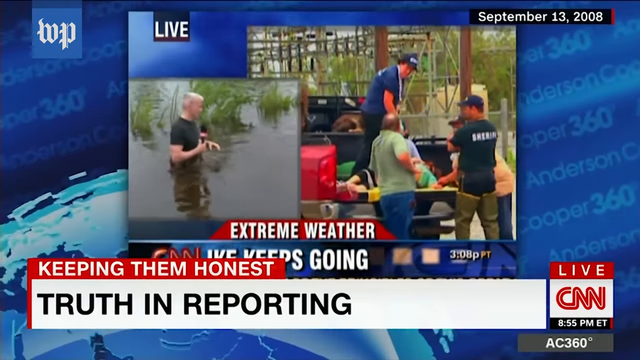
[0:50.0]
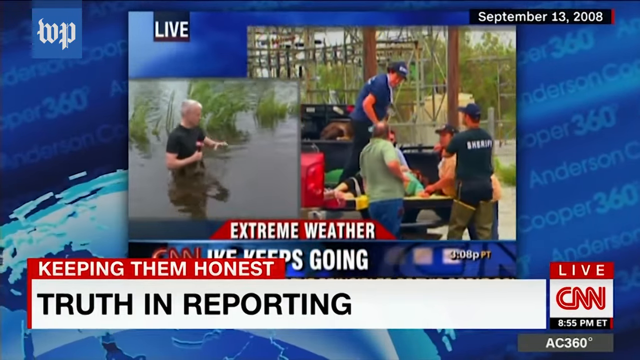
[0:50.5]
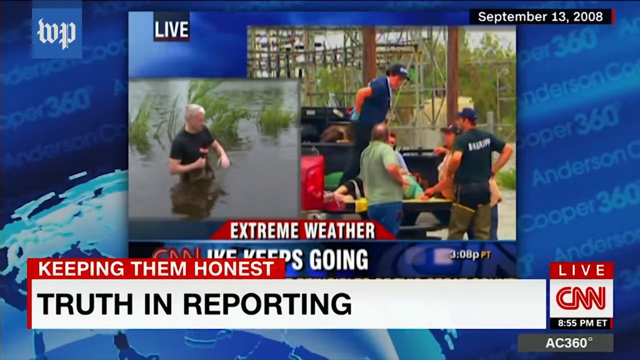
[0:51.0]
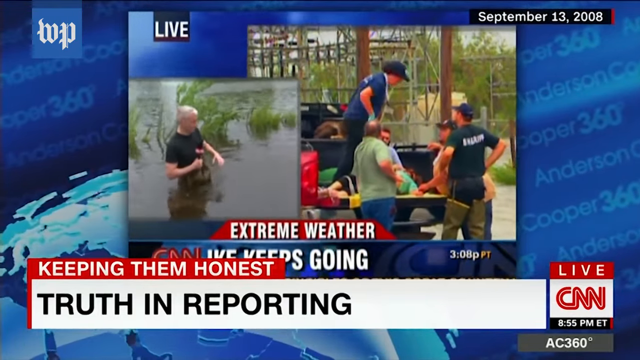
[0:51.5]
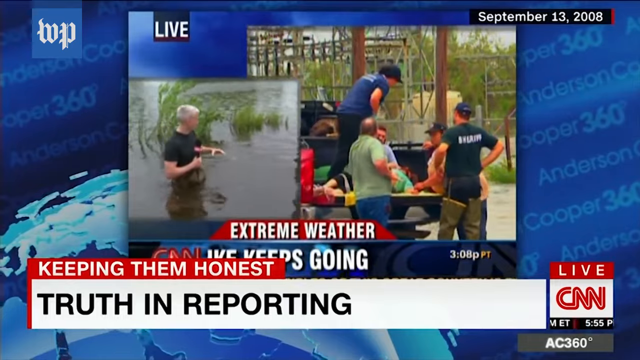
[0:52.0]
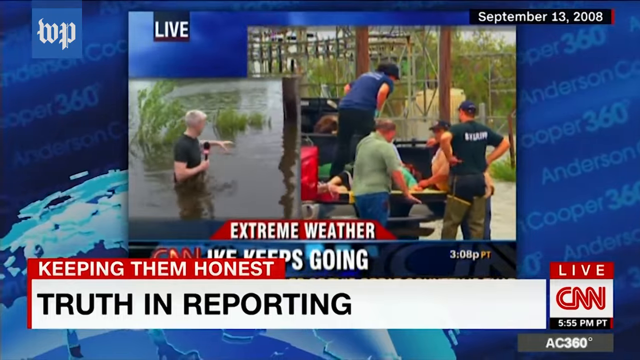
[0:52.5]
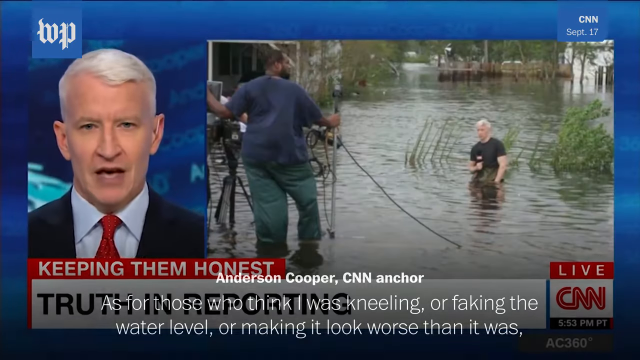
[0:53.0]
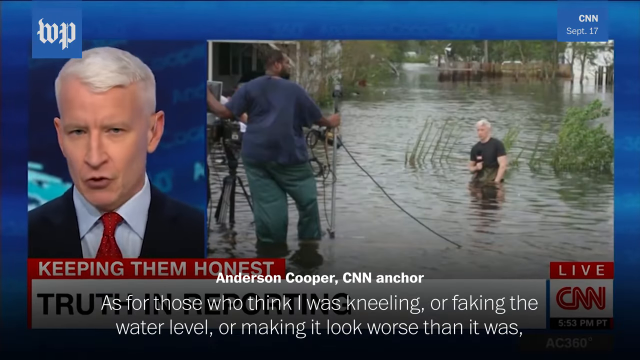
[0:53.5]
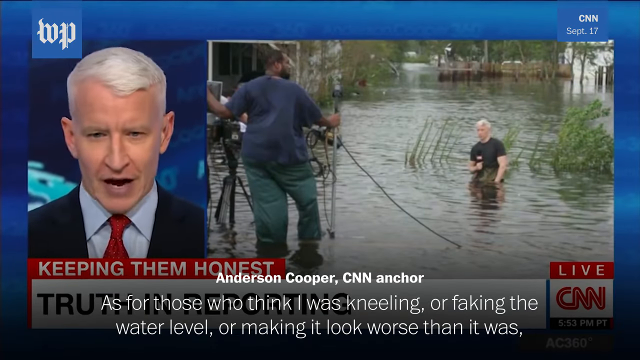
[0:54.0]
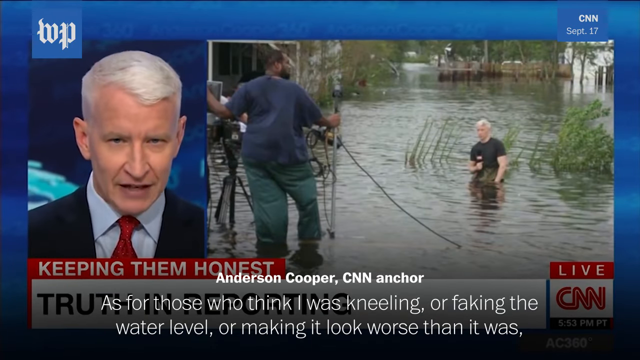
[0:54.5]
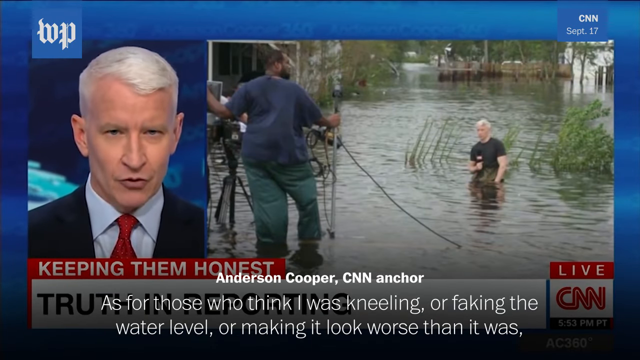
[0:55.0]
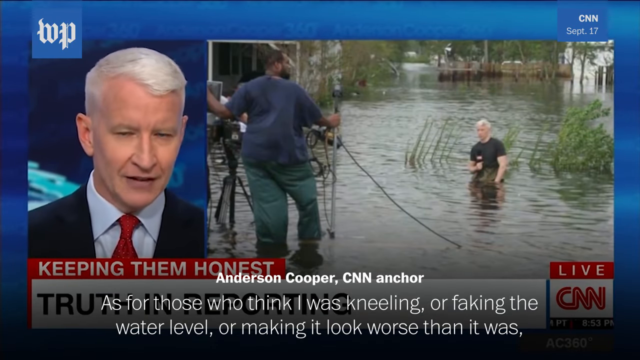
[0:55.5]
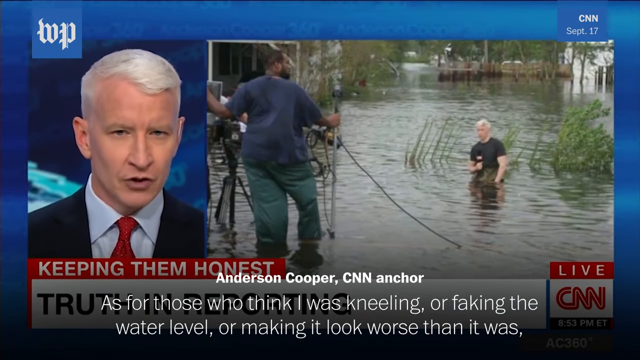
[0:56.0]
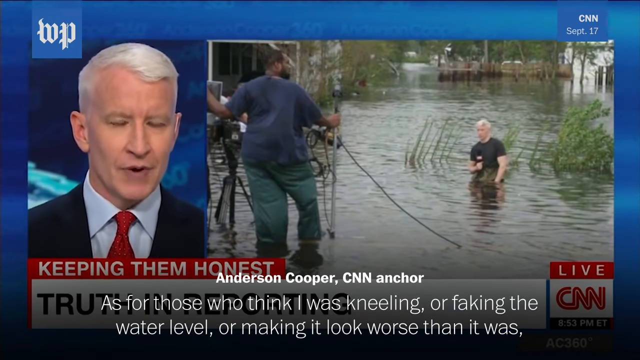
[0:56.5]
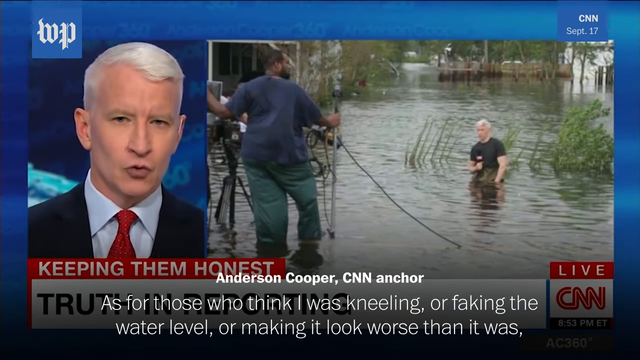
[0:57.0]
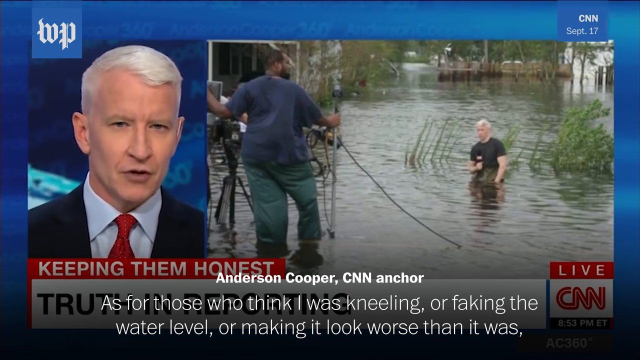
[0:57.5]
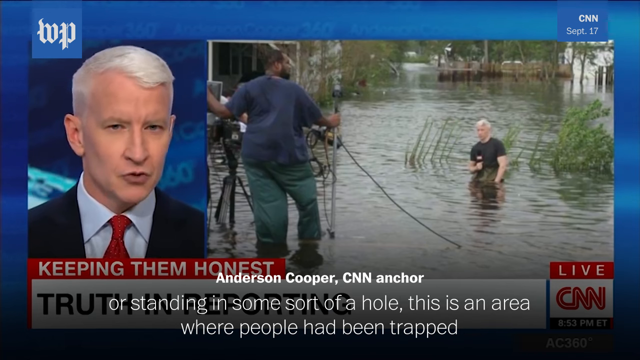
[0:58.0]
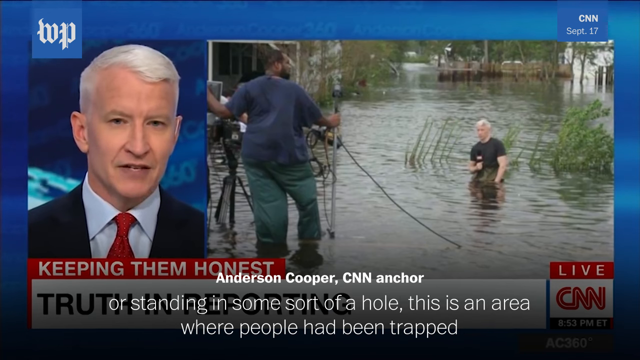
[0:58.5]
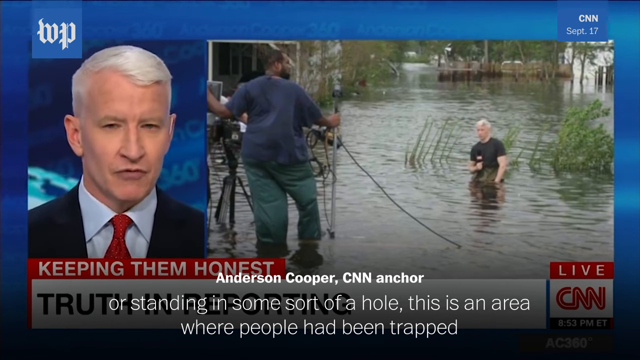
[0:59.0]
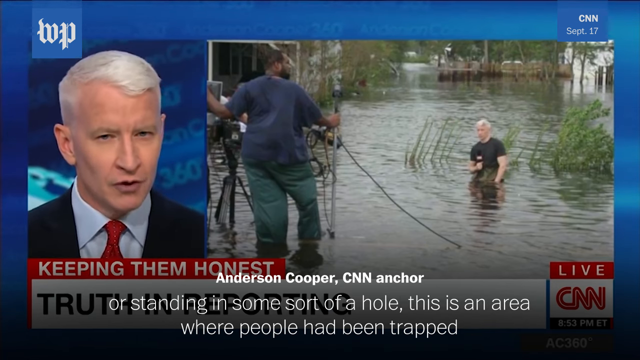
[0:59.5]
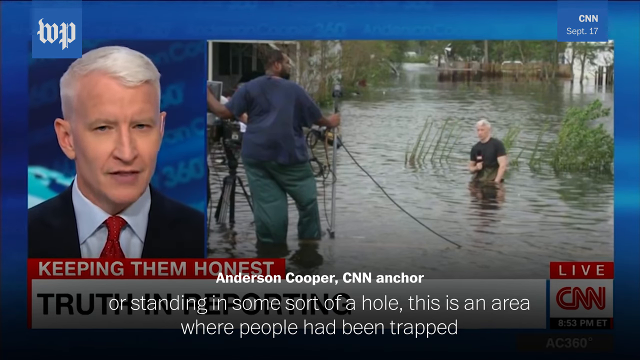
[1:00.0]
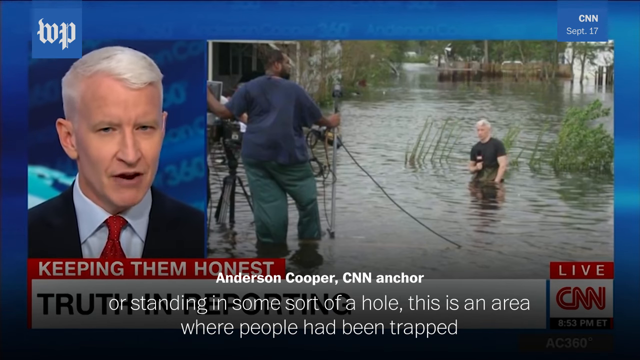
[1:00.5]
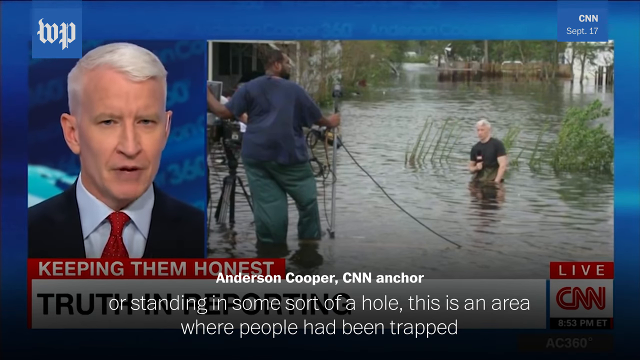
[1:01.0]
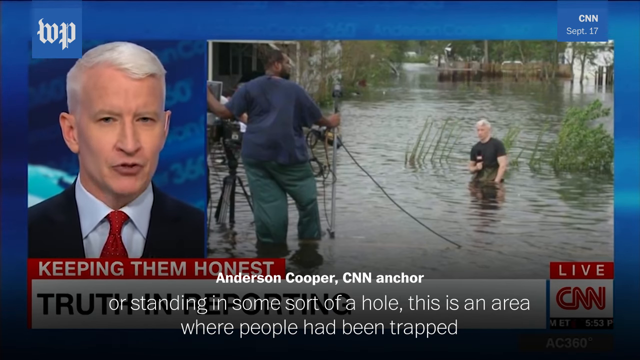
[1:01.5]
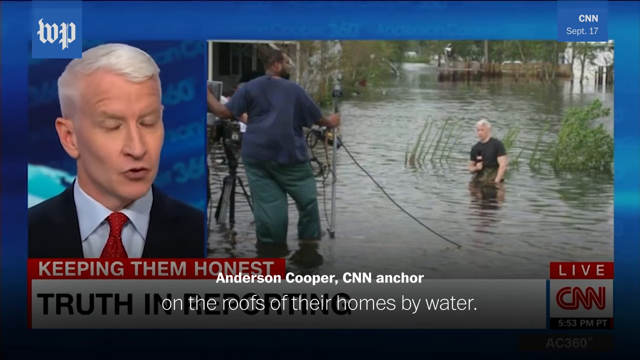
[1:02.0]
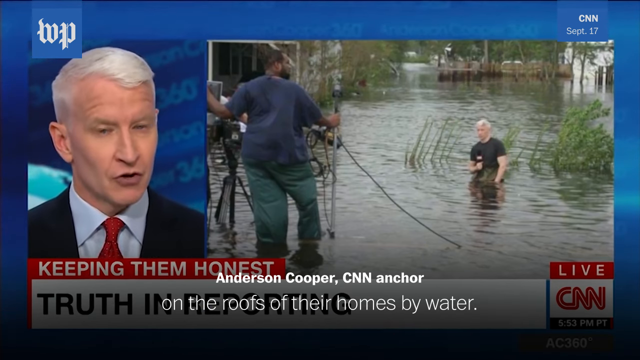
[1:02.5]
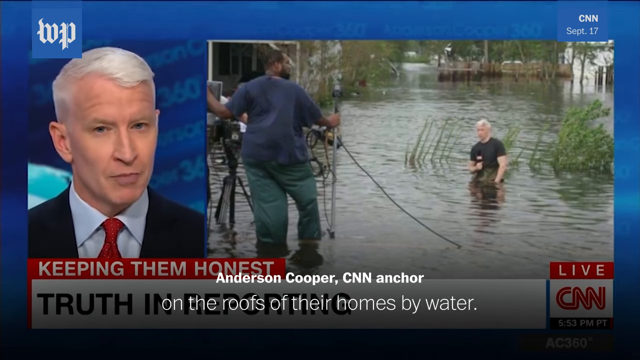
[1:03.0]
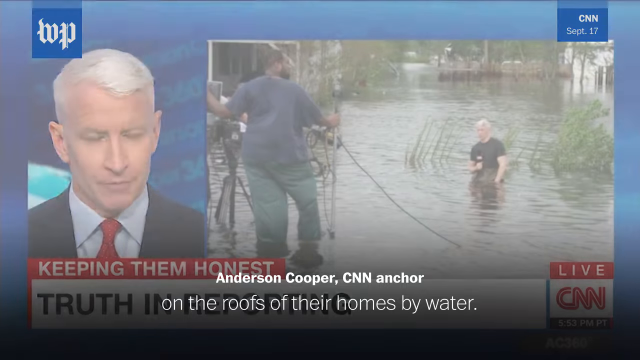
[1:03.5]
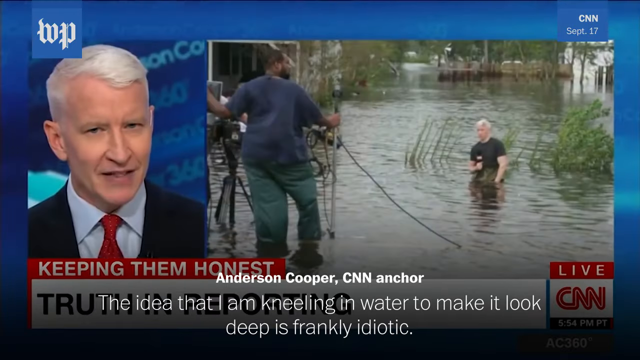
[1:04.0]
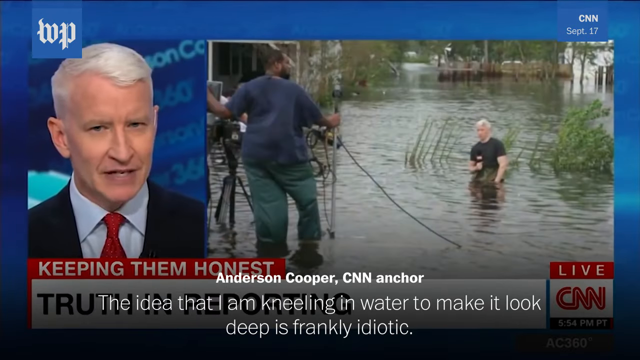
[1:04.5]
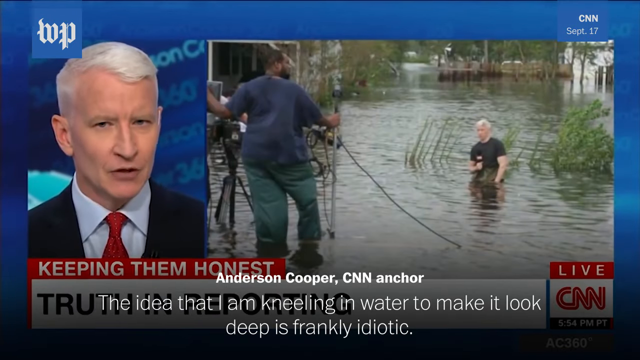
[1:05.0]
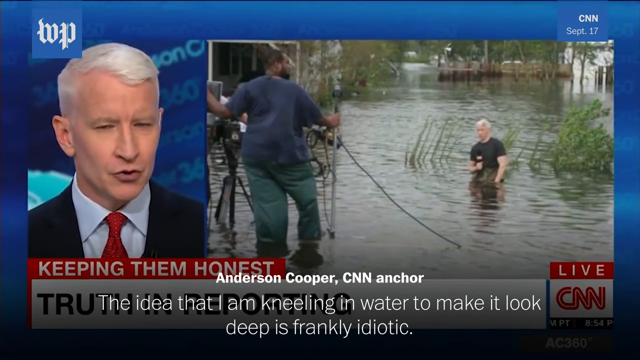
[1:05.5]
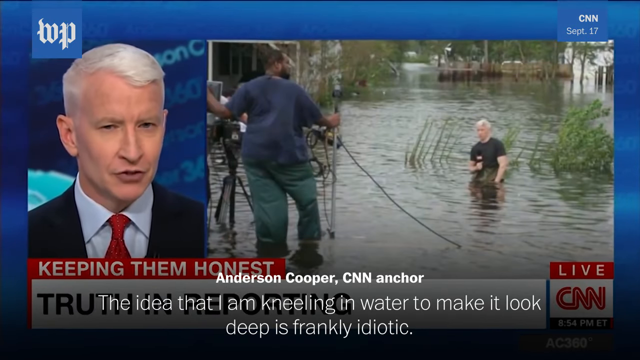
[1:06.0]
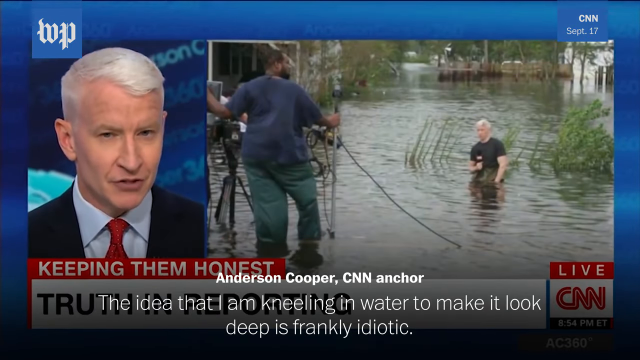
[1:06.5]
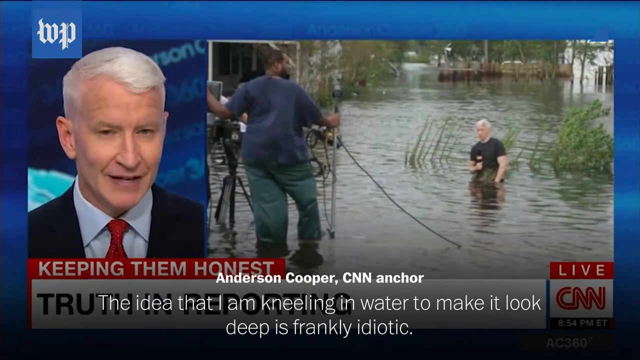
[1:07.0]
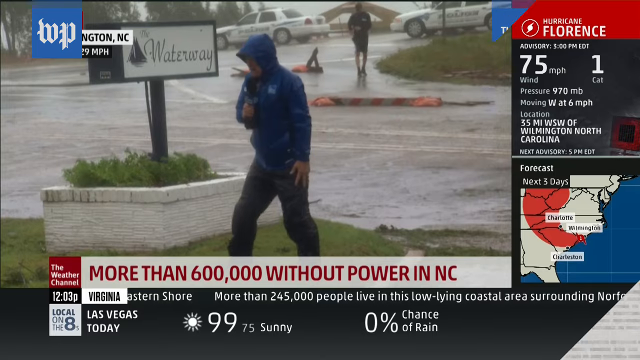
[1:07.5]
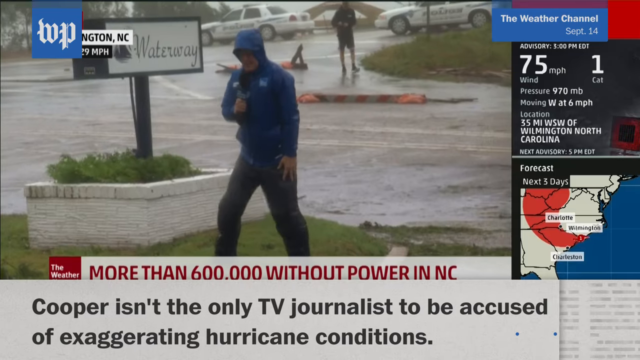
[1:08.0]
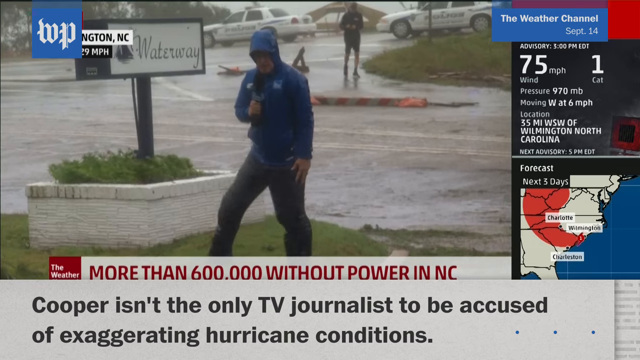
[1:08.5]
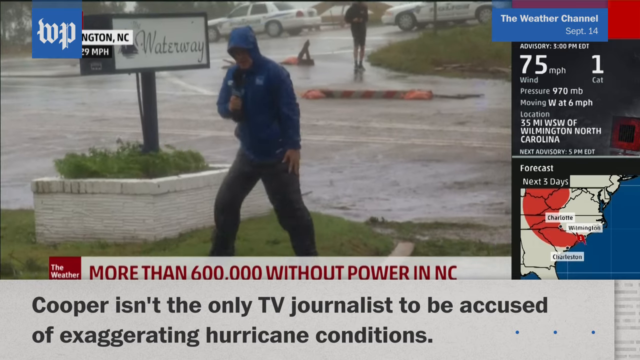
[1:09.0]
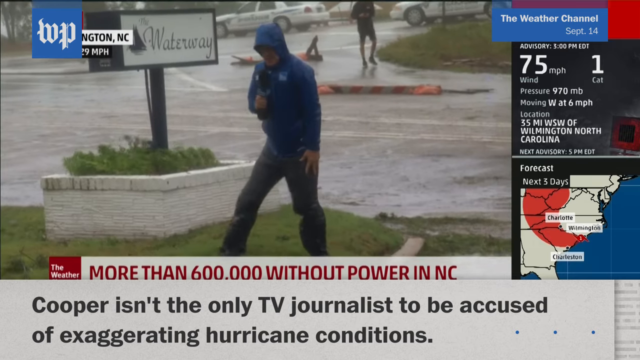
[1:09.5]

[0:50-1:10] CNN-style footage continues to show Anderson Cooper in a flood setting, presented as a CNN news anchor, with on-screen text that mentions an area "where people have been trapped."